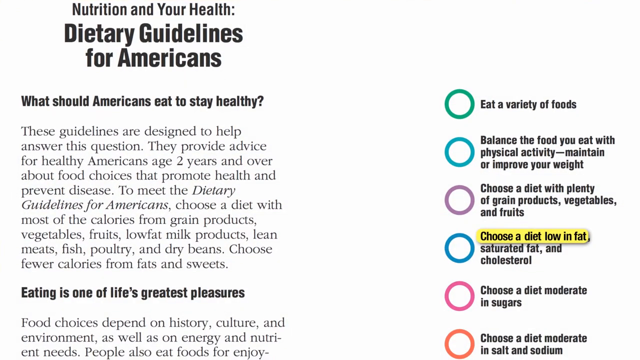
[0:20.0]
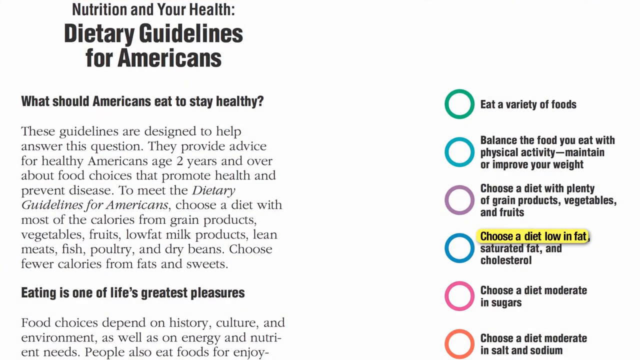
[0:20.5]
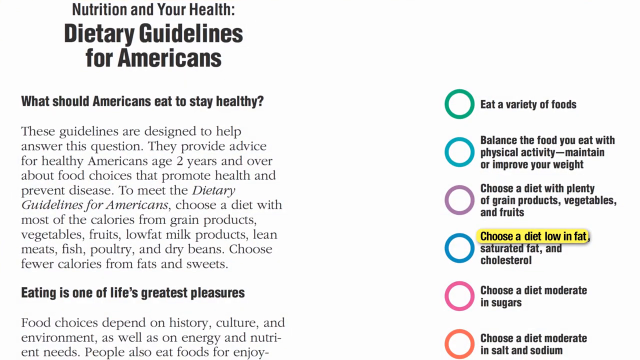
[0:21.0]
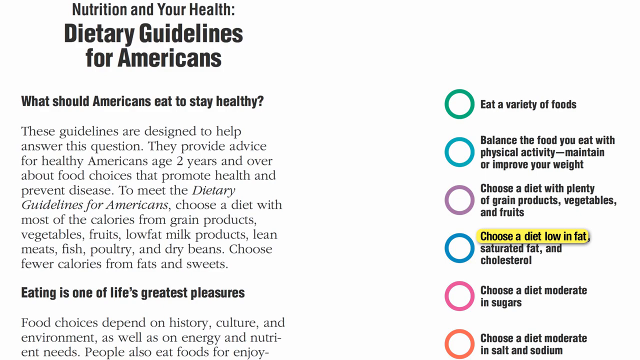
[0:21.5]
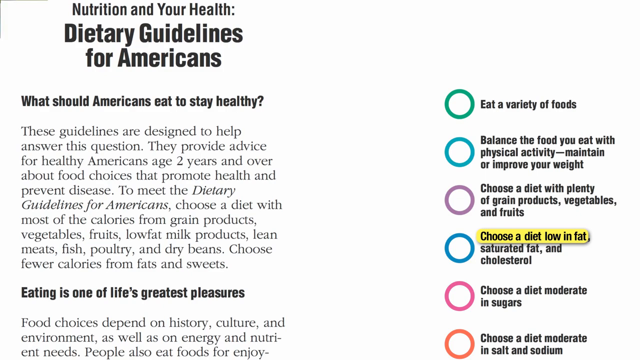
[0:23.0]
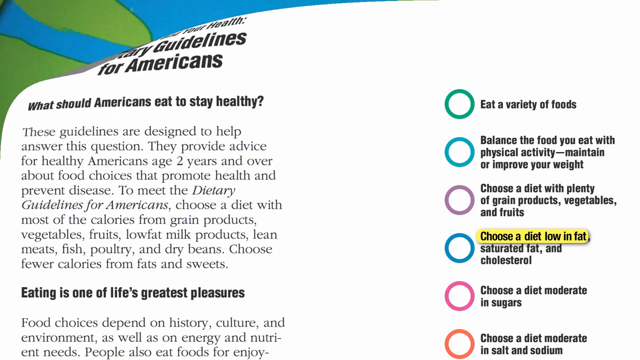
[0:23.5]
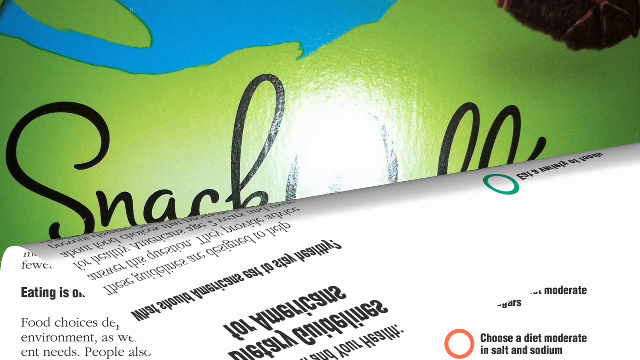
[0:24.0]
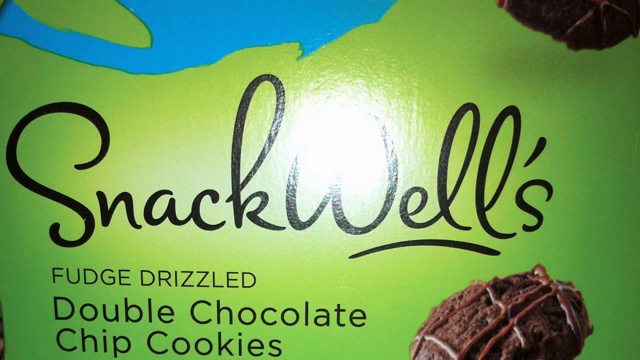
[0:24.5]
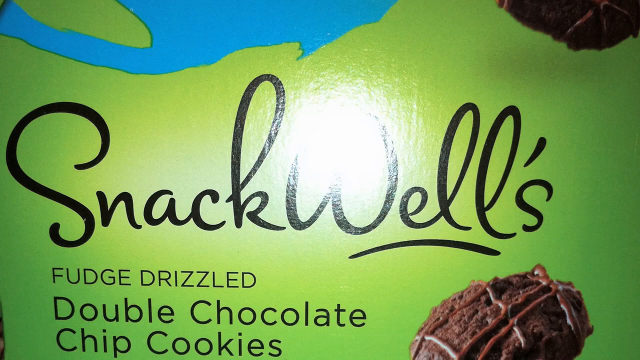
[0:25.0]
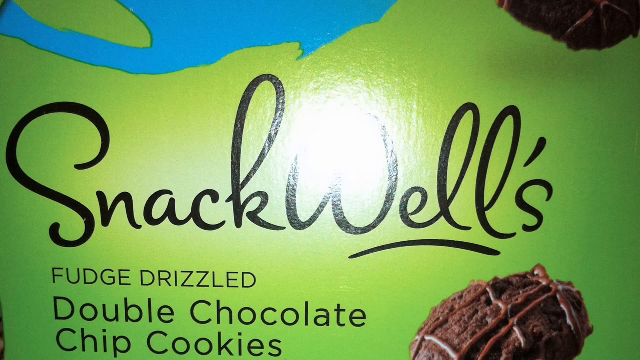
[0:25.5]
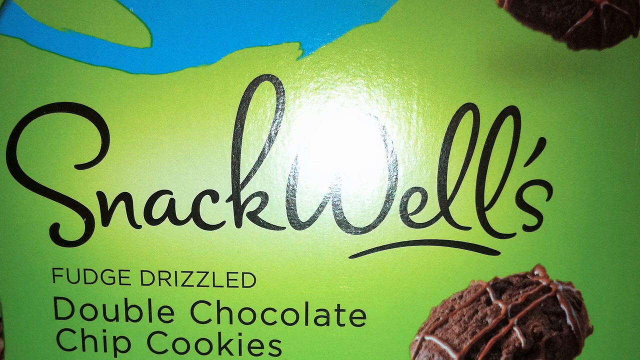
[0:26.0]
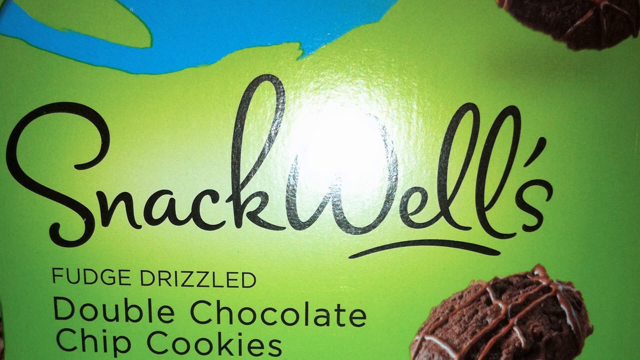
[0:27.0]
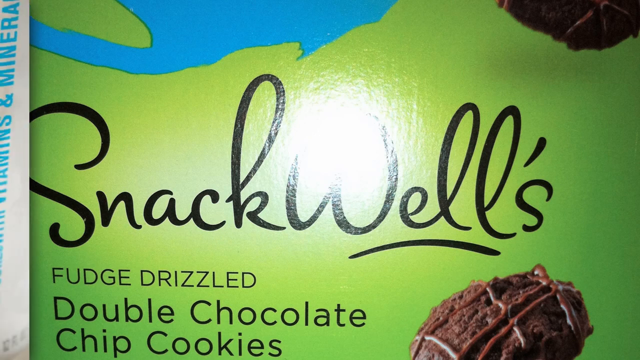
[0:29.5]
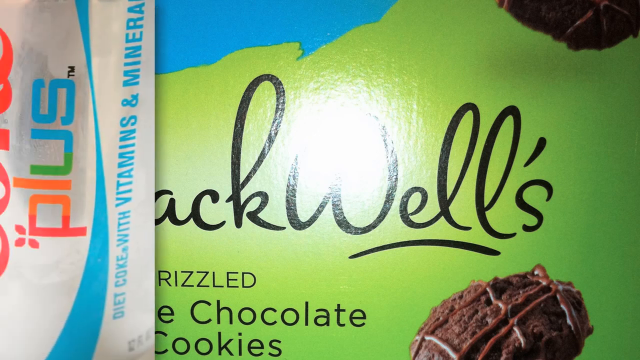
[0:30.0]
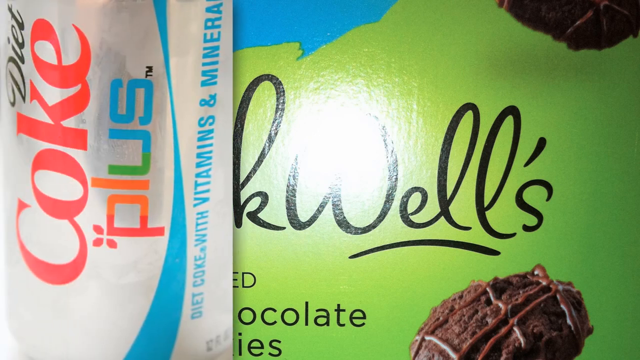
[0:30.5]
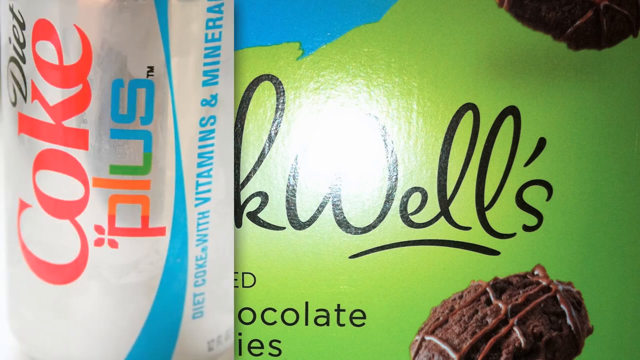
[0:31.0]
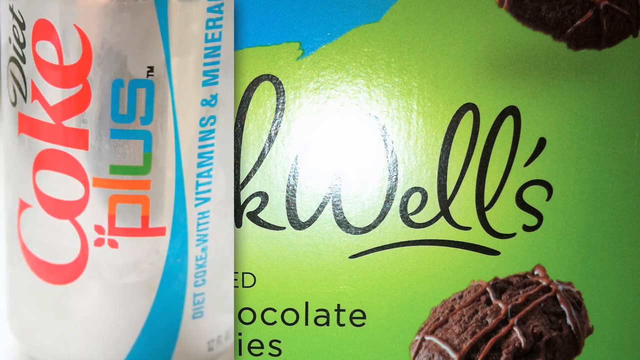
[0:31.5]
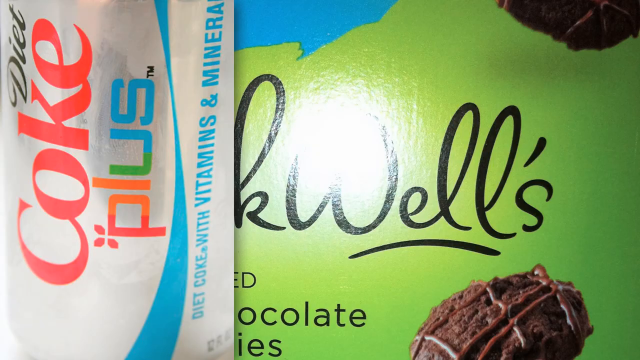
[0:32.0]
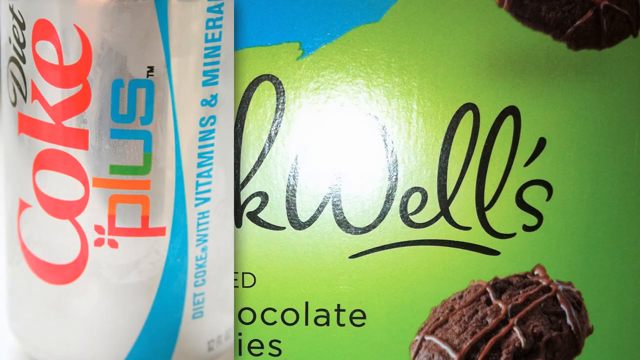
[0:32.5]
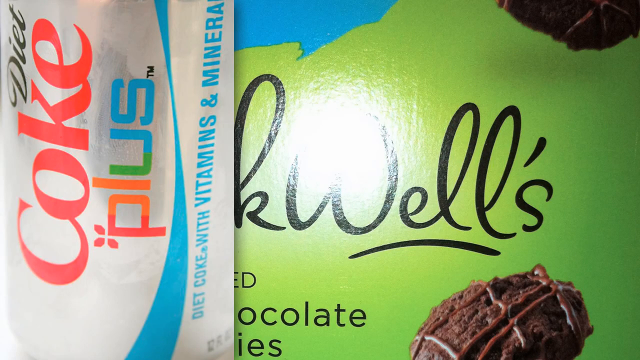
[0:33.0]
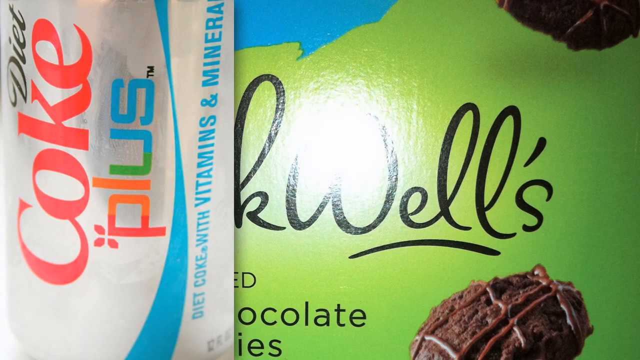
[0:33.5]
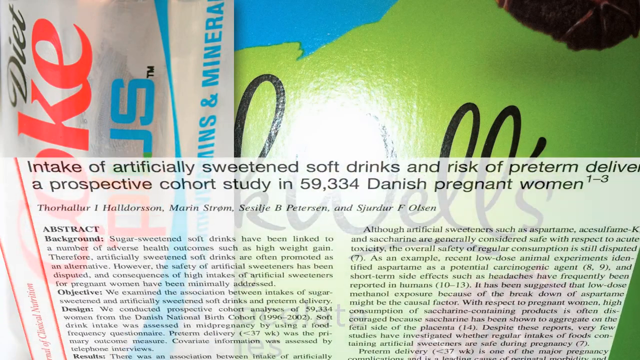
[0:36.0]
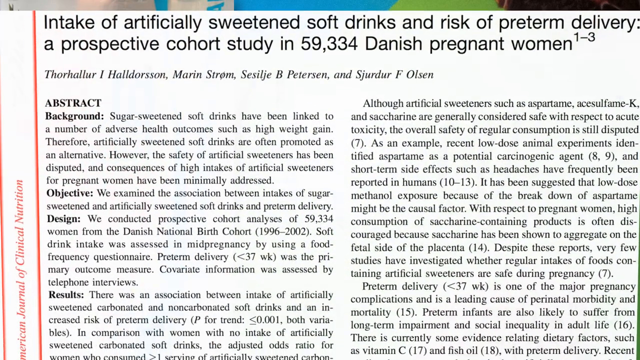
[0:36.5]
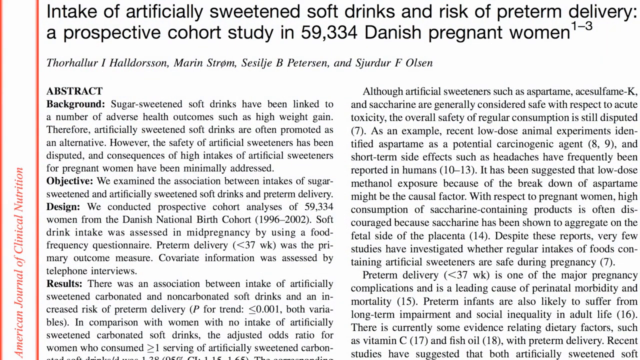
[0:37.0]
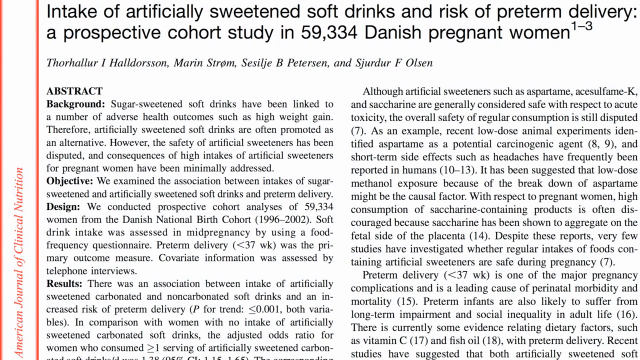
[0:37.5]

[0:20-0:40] The first screen appears to show dietary nutrition guidelines, with eating low-fat highlighted as important: "choose a diet low in fat". The next screen is an image of a Snackwells fudge-drizzled double-chocolate box of bars, and then a Diet Coke Plus image pops up beside it. The third slide is a research article about how artificial sweetener carries a risk of preterm delivery.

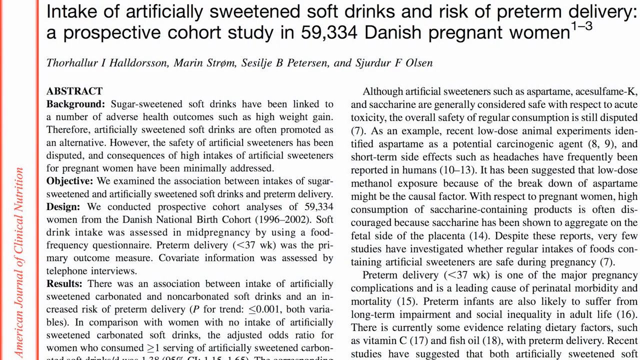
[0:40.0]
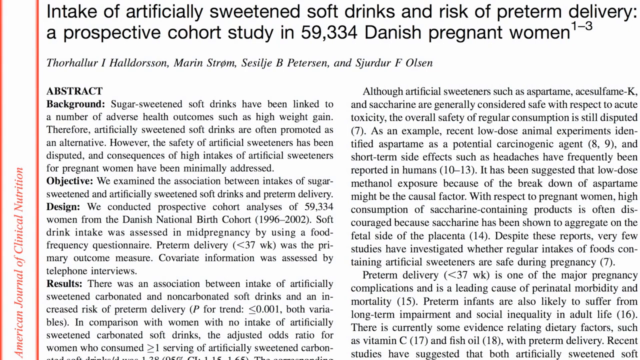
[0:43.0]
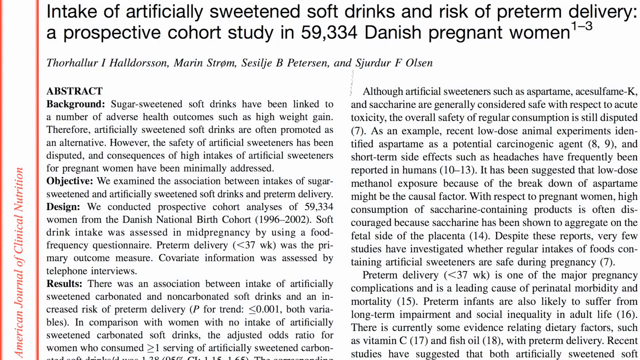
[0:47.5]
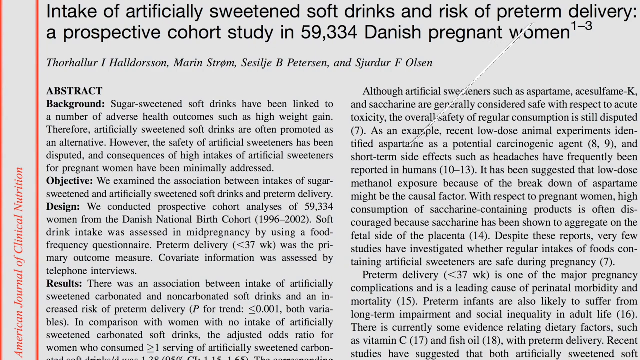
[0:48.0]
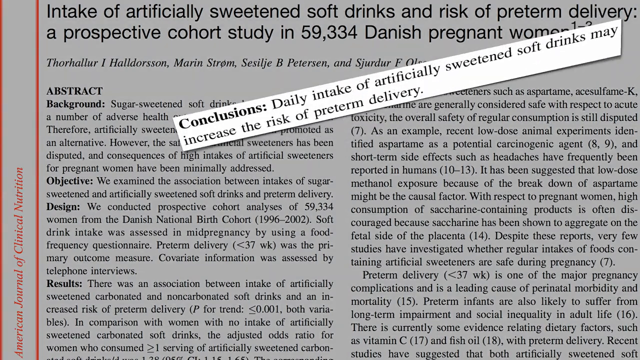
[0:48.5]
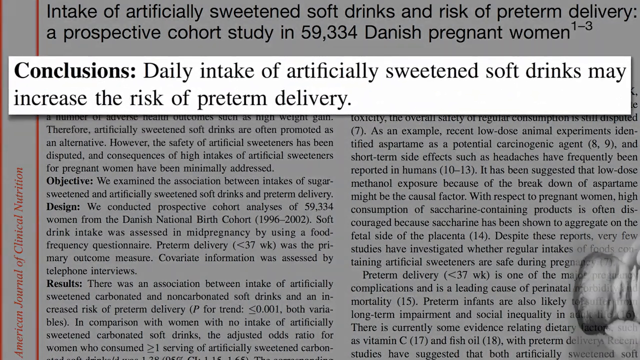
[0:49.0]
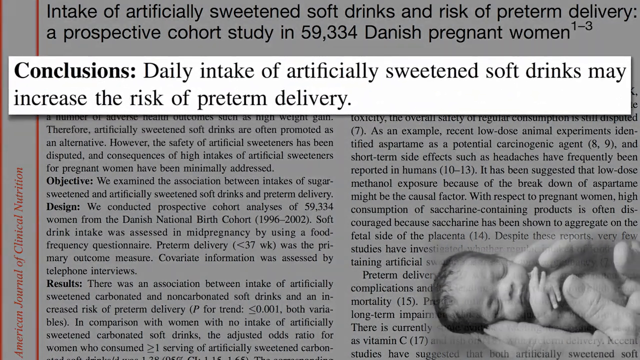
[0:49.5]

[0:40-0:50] The study is shown about how artificially sweetened soft drinks, with things like aspartame, and Diet Coke can lead to a risk of preterm delivery. The image is part of the study, like its abstract, with a picture of a baby in the corner. After that, the conclusions of the study are highlighted in larger, clear font: "daily intake of artificially sweetened soft drinks may increase the risk of preterm delivery". Initially at the top, and remaining throughout, is the title of the scientific article: "intake of artificially sweetened soft drinks and risk of preterm delivery a prospective cohort study in 59,334 Danish pregnant women".